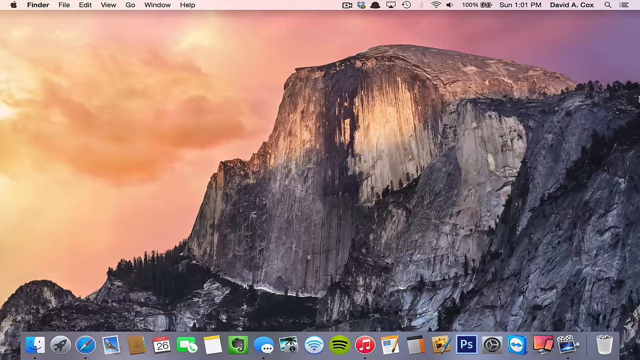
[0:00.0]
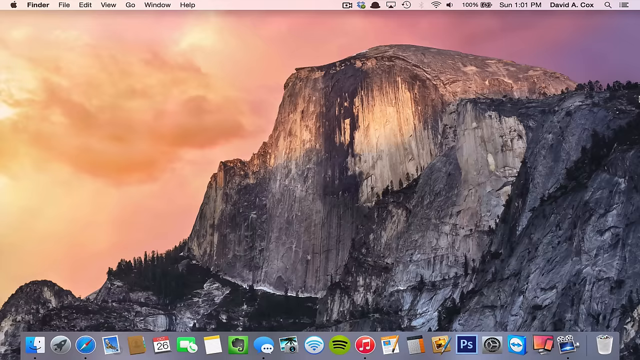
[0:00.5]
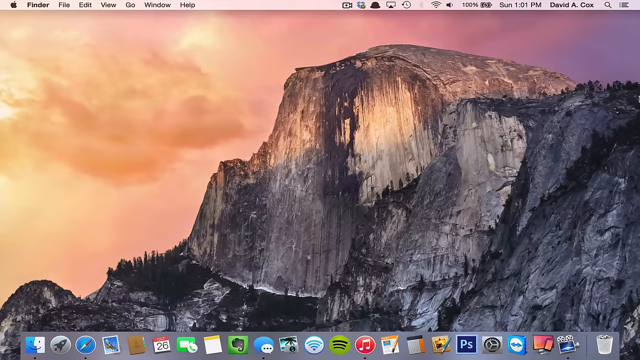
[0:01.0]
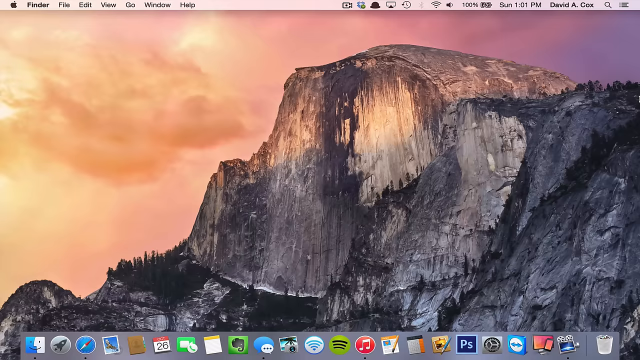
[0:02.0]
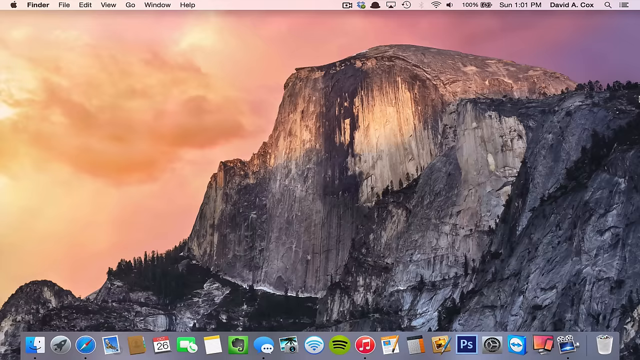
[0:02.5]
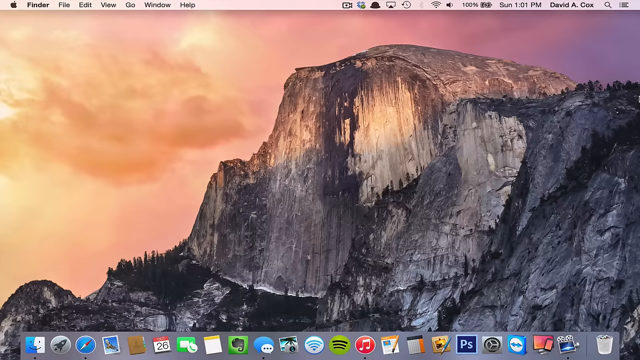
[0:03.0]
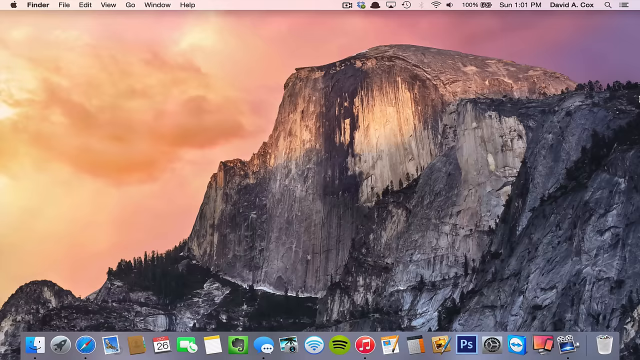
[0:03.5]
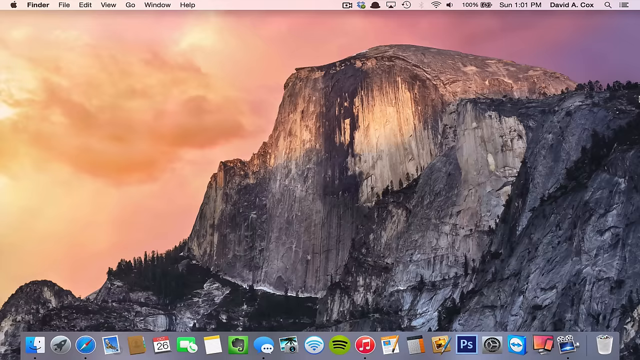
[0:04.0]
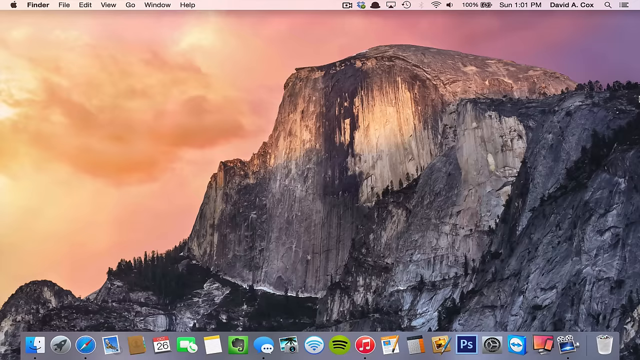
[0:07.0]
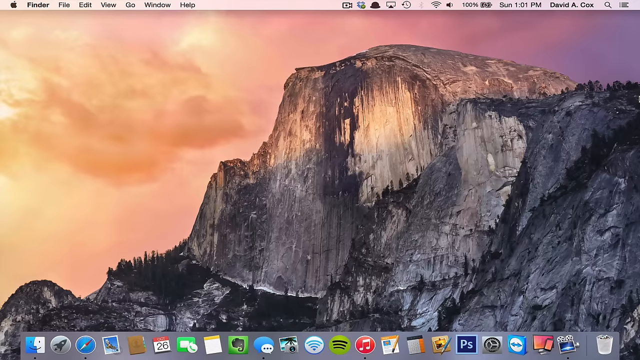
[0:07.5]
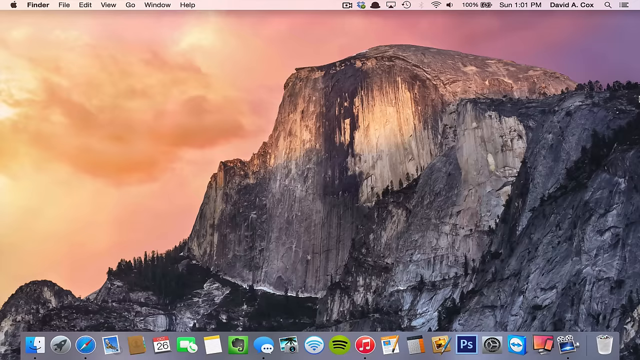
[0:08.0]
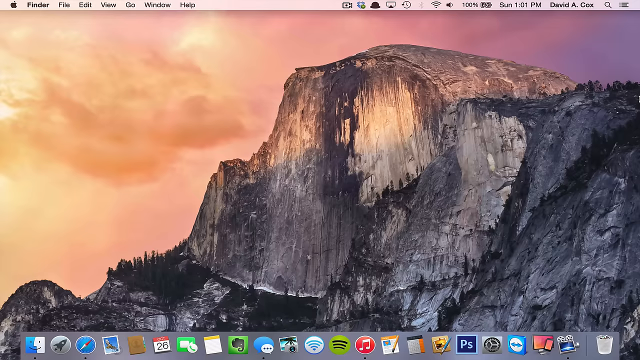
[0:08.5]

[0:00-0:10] A mountain face rises straight up and down. It is made of different kinds of rock, in light colors, grays, blacks and cream colors. Evergreens grow at the base of the mountain, and a bunch of evergreens grow on top of the surrounding mountain. The sun shines on the face, making the cream-colored area bright. Some evergreens also grow halfway up the surrounding area of the mountain. At the base of the mountain is a small area that is apparently dirt, since things are growing in it.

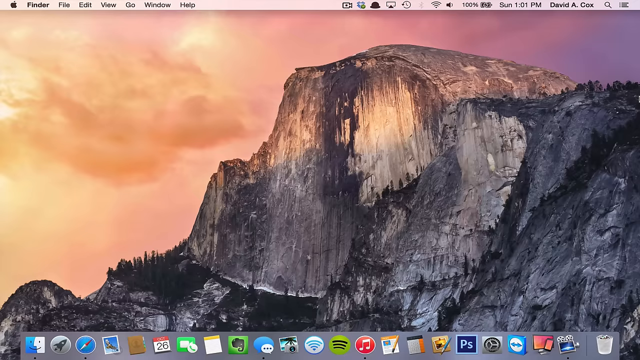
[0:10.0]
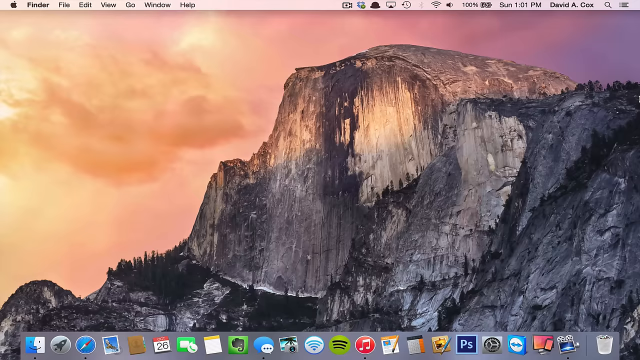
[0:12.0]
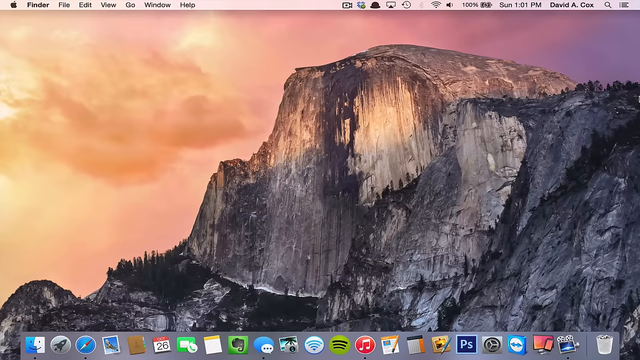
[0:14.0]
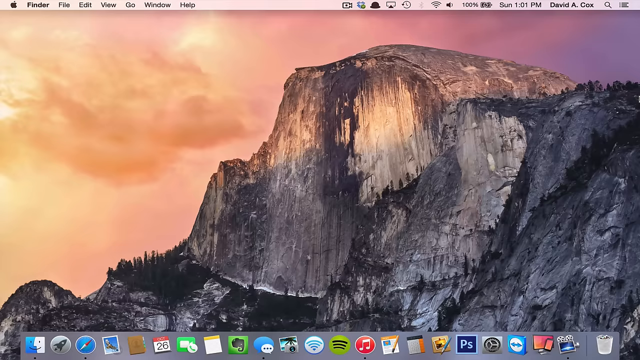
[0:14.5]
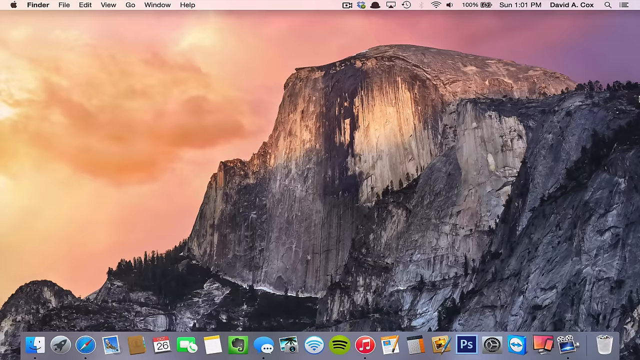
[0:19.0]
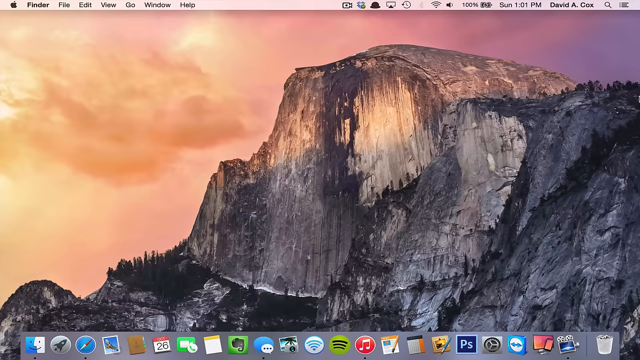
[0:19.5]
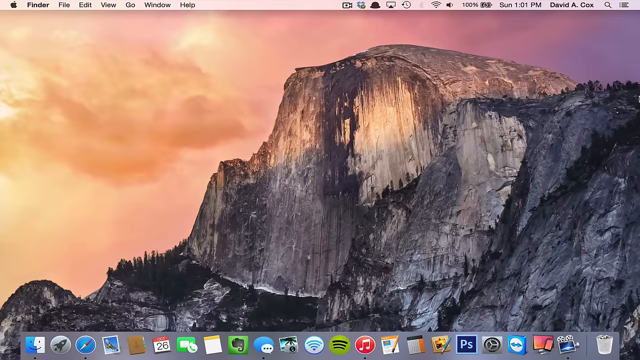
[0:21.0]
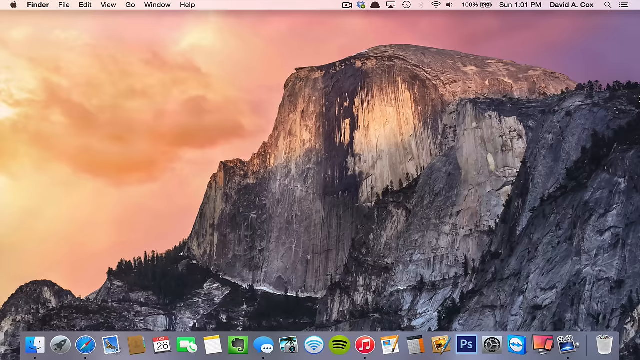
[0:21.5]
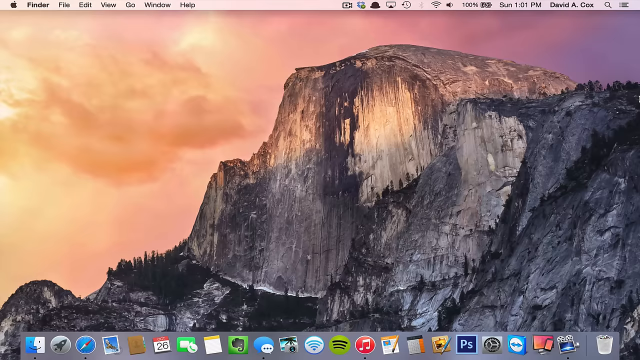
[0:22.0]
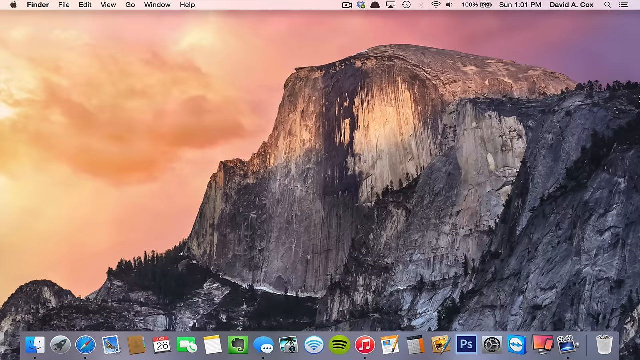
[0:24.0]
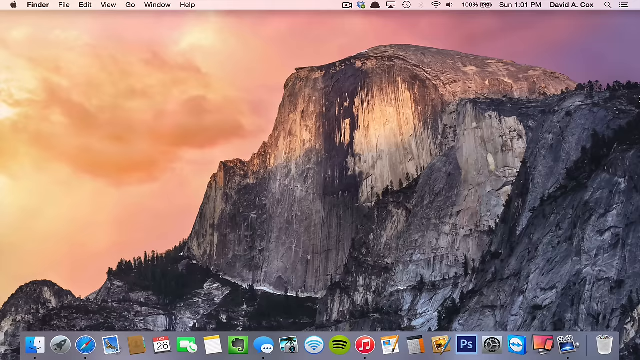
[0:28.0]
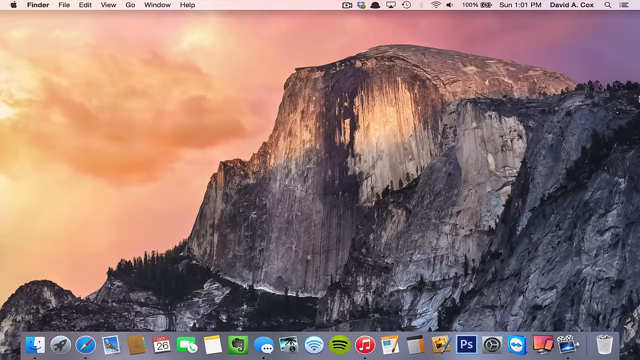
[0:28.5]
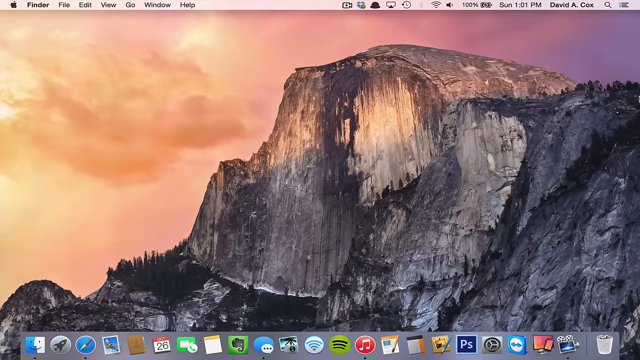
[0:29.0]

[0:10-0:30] Nothing moves; the scene looks like a still picture. There are no people in the area and nobody is rock climbing, and it looks kind of desolate. The view is possibly taken from a trail or parking lot. The evergreens seem to be about the only thing growing; there do not appear to be regular trees, only different kinds of conifers. The top of the mountain has a rounded area.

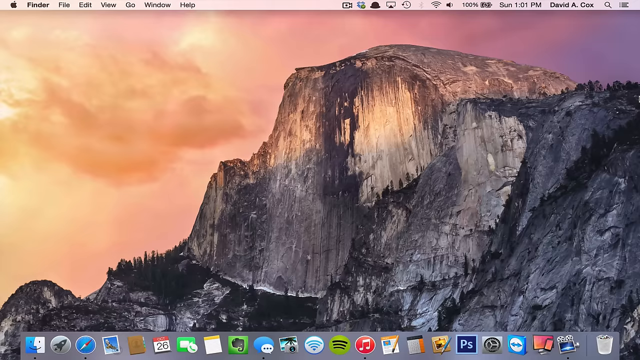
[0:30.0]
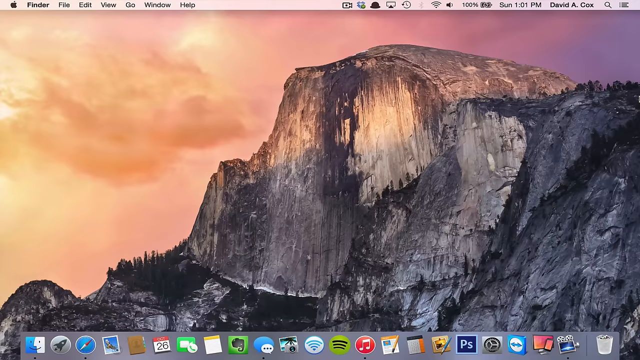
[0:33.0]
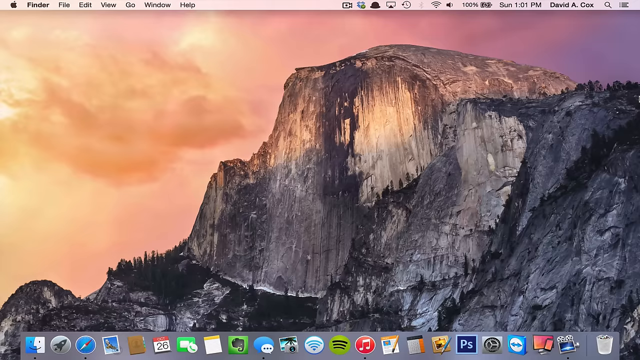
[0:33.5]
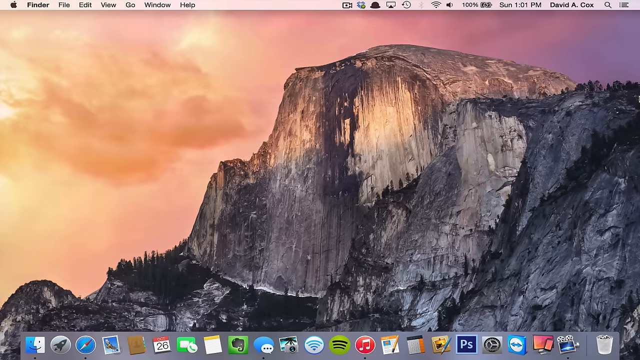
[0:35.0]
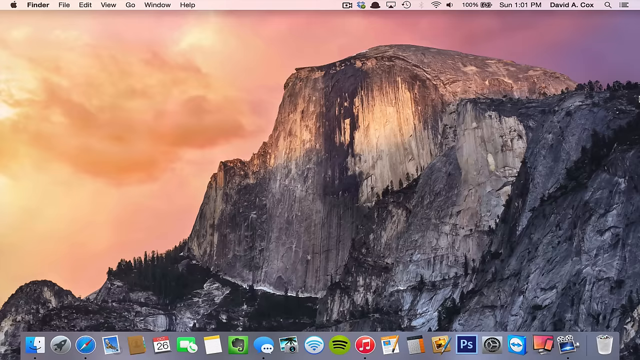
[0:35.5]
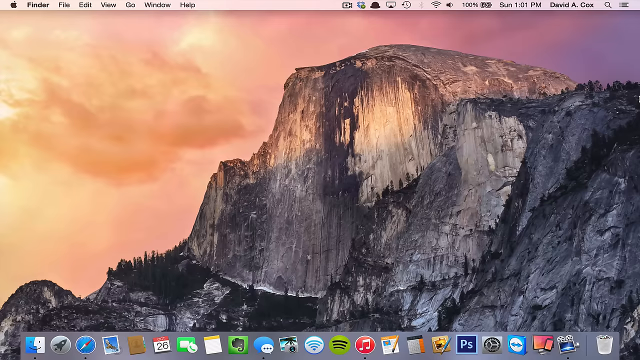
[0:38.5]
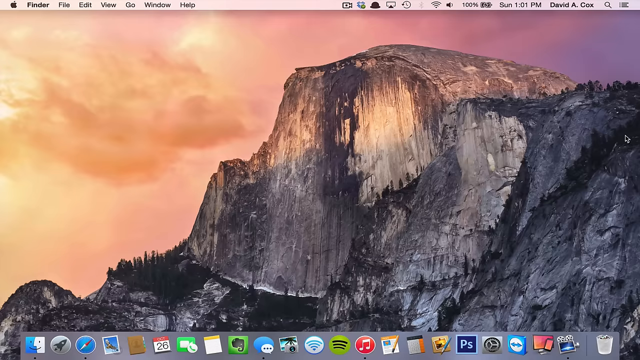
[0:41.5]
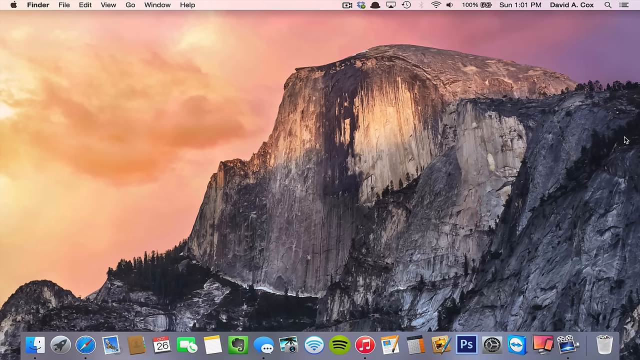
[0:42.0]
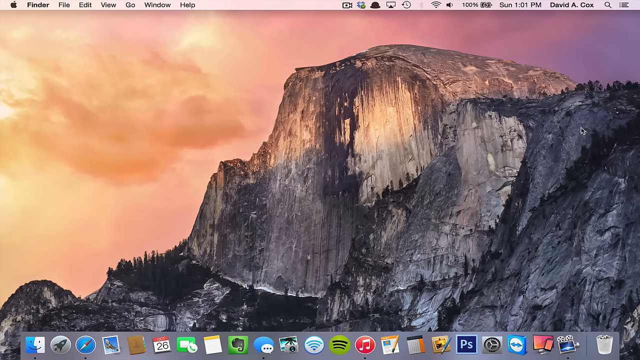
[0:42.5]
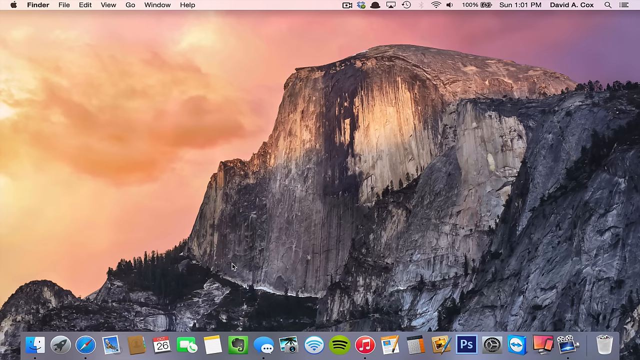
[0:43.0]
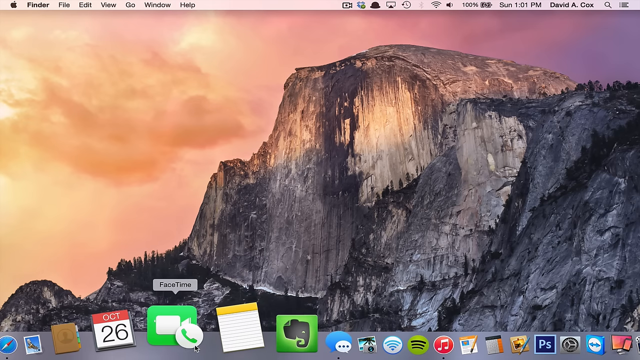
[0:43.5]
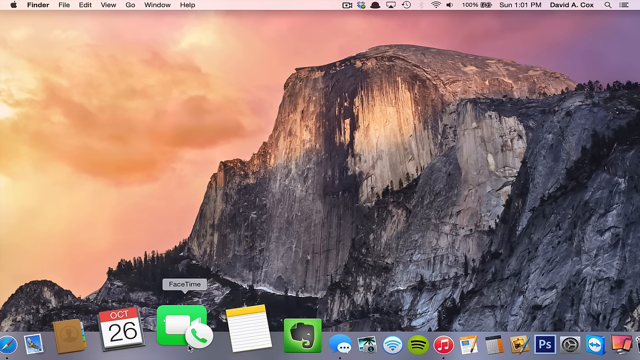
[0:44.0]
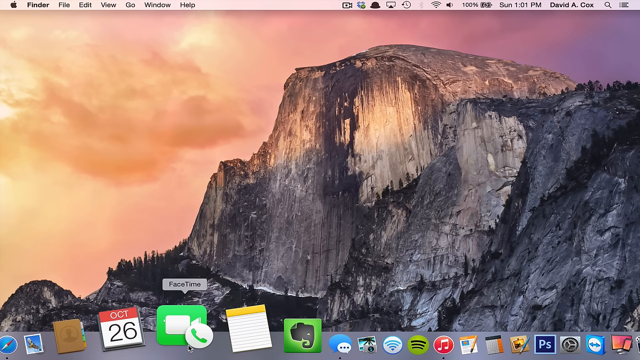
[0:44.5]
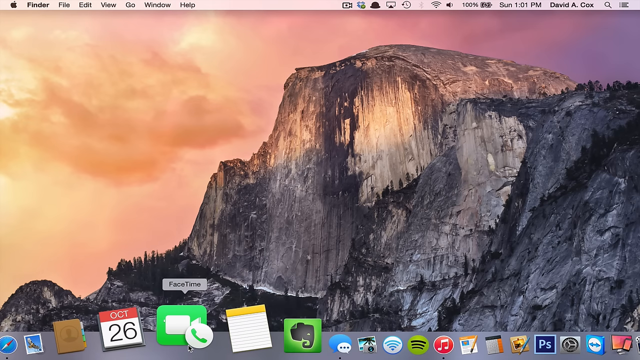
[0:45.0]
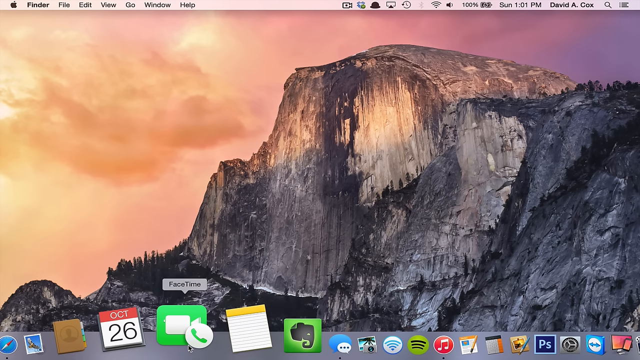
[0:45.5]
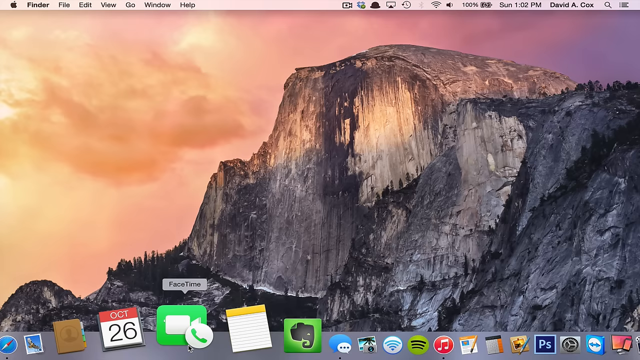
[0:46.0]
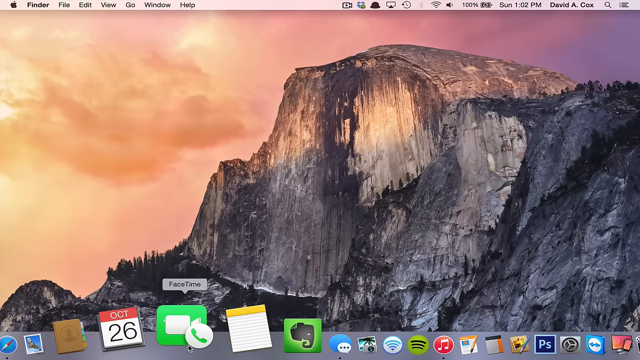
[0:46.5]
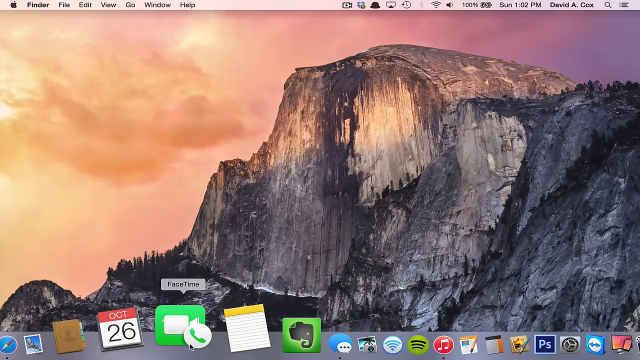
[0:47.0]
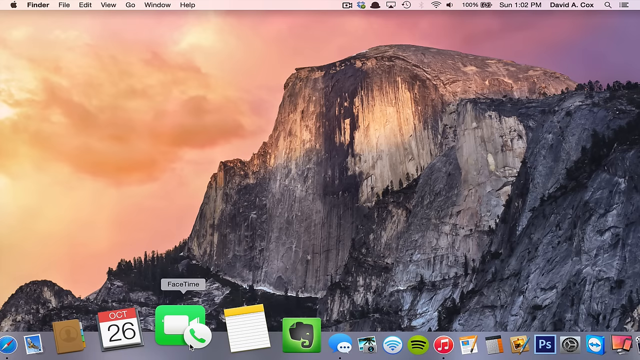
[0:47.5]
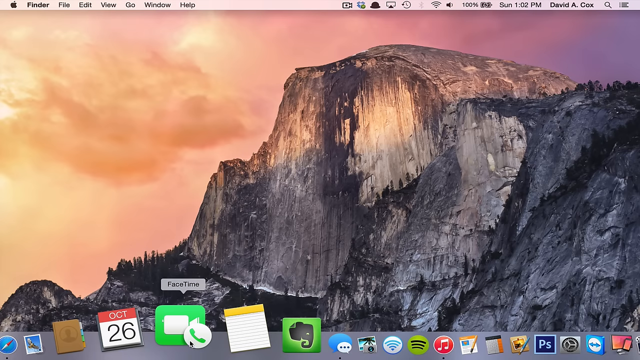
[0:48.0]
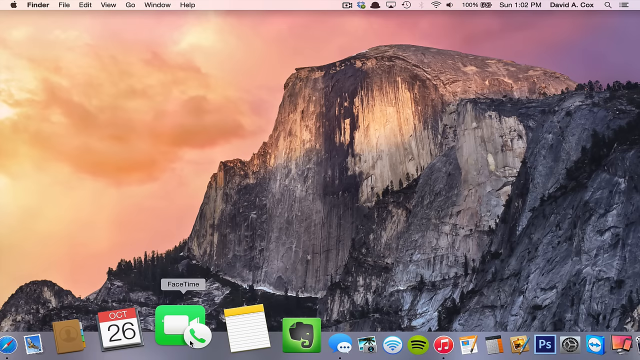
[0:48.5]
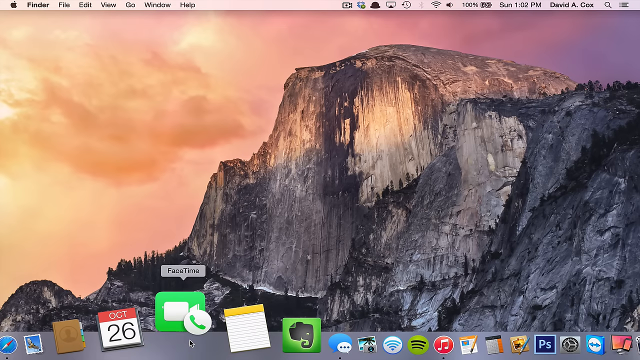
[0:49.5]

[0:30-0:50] The screen does not move and looks like a still picture. Toward the end, small app symbols appear along the bottom, with the FaceTime icon flashing repeatedly. Several other apps at the bottom are half in and half out of the frame, making them hard to see. Among them are the date, the music app, Notes, the calendar and settings, along with a signal indicator and a Wi-Fi symbol showing signal strength. The whole bottom of the screen is covered with different apps, apparently at least 15 or 20 of them, making it busy.